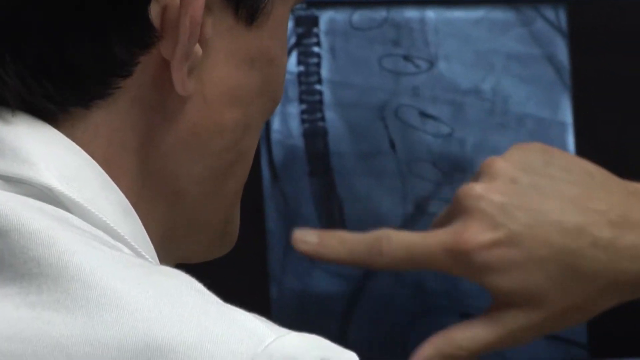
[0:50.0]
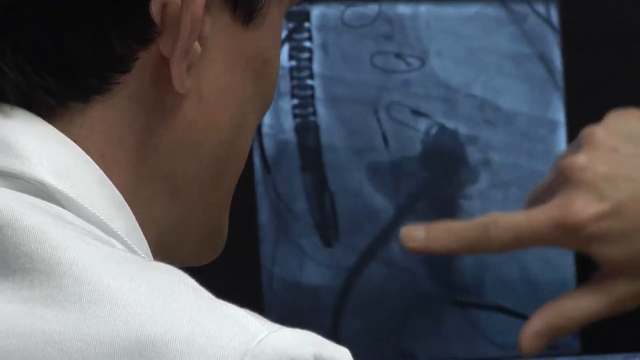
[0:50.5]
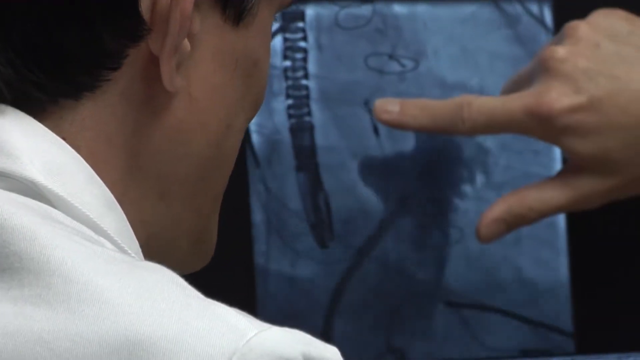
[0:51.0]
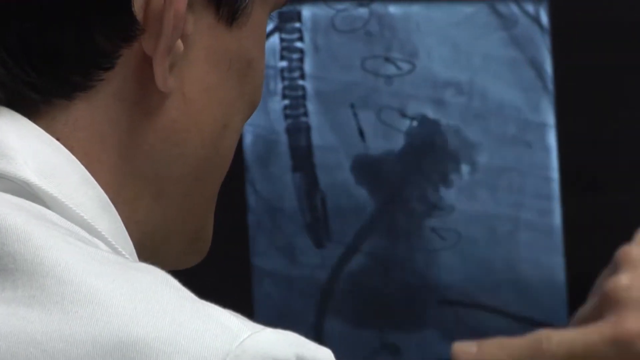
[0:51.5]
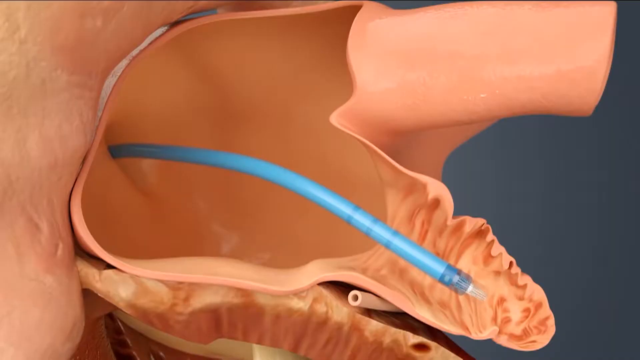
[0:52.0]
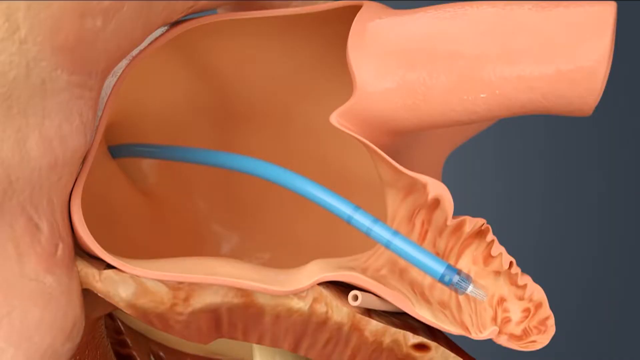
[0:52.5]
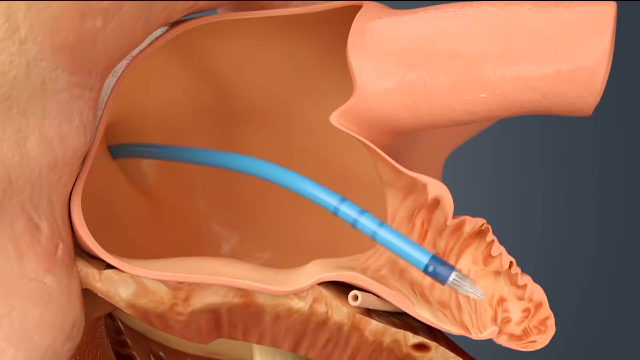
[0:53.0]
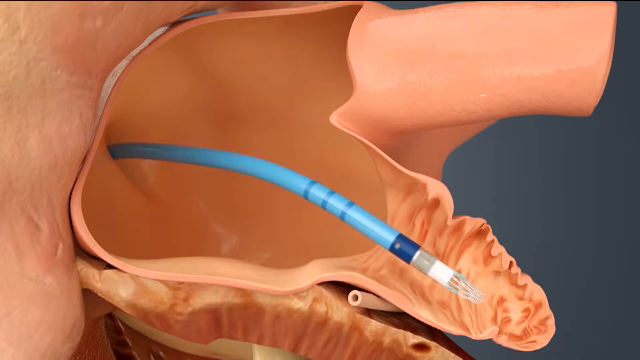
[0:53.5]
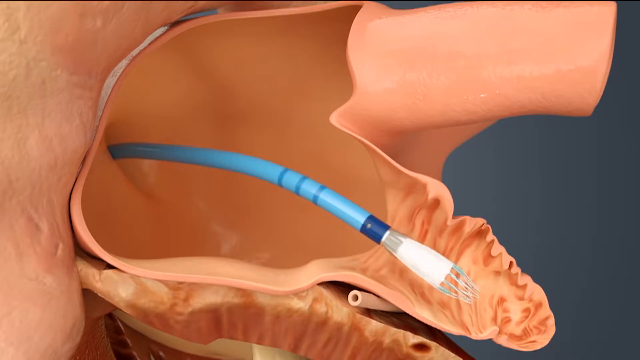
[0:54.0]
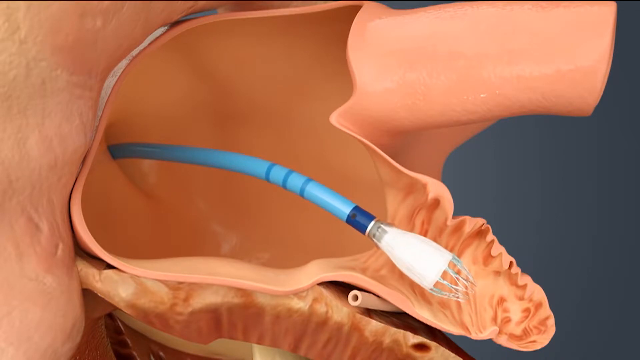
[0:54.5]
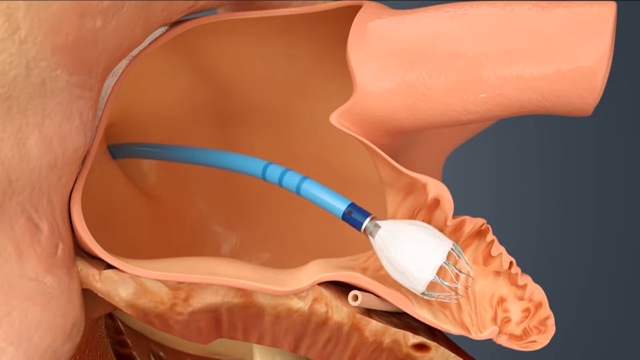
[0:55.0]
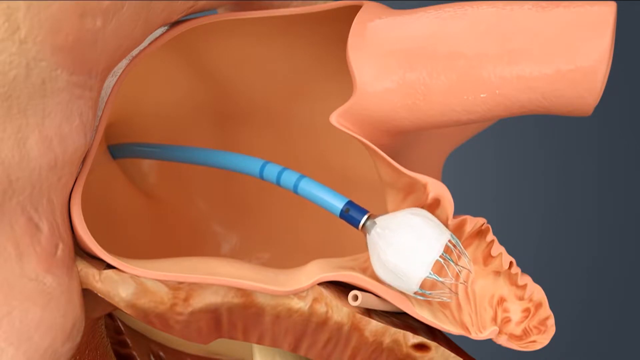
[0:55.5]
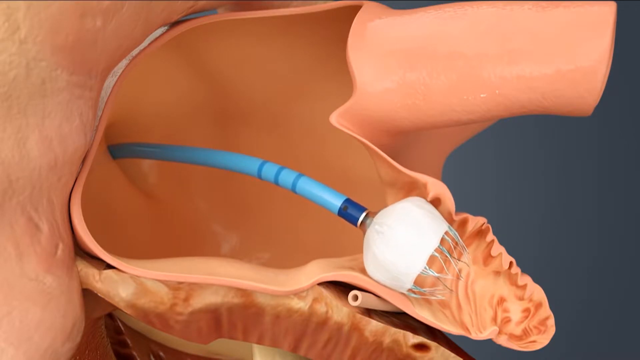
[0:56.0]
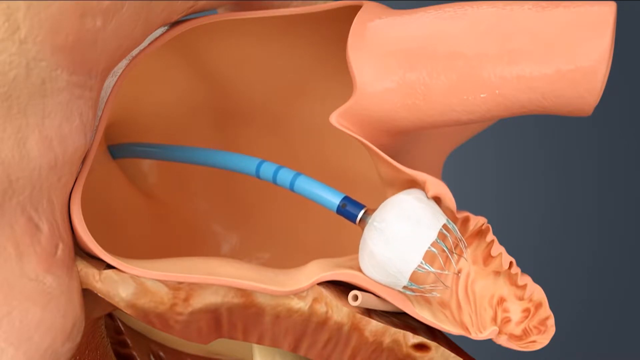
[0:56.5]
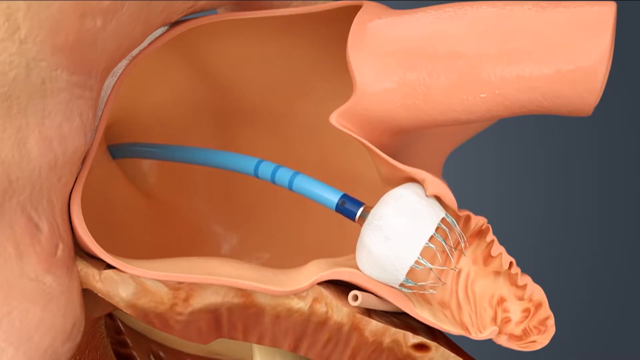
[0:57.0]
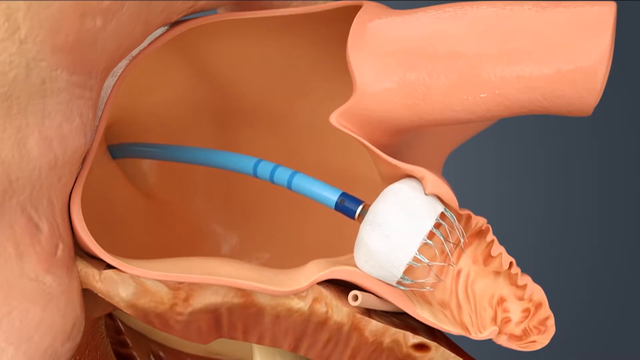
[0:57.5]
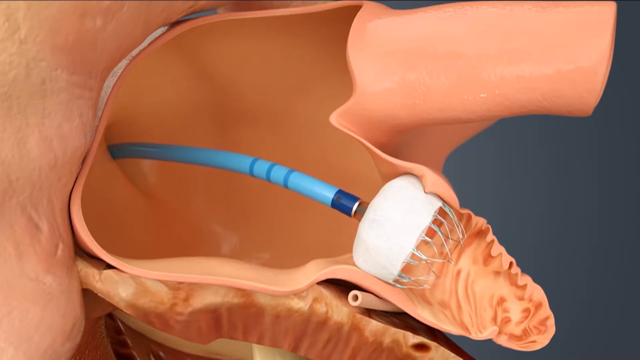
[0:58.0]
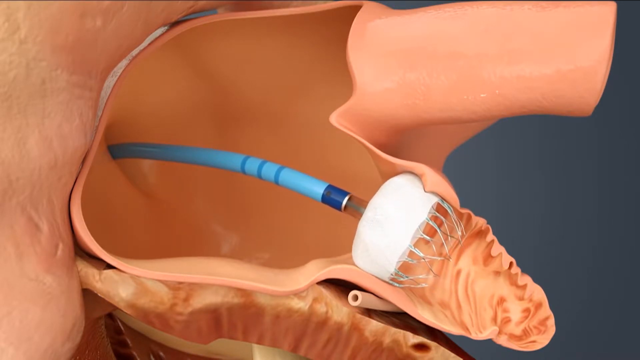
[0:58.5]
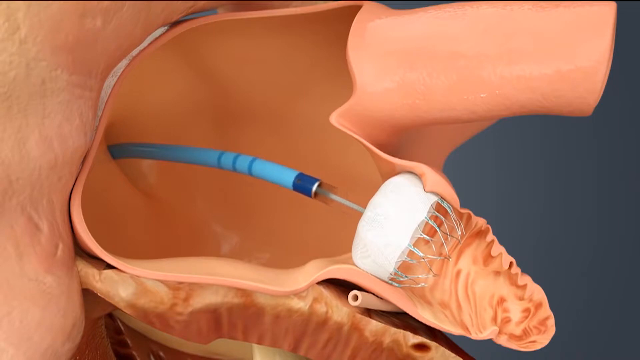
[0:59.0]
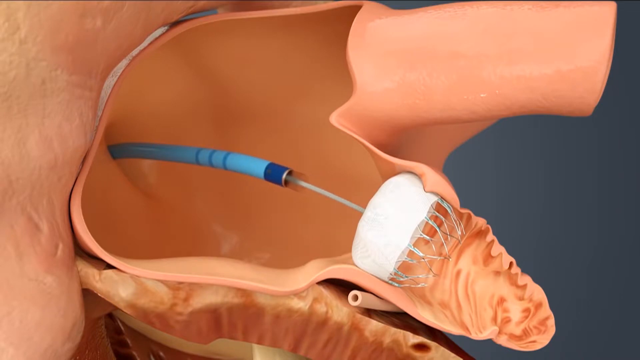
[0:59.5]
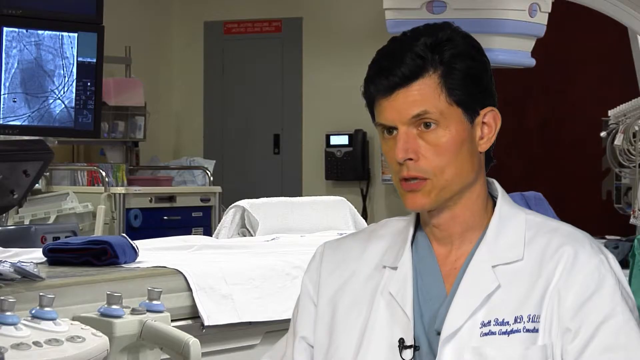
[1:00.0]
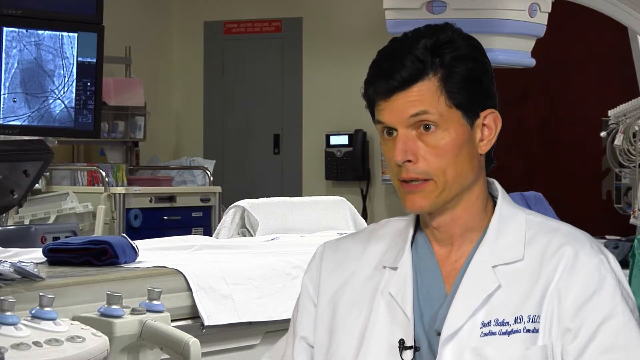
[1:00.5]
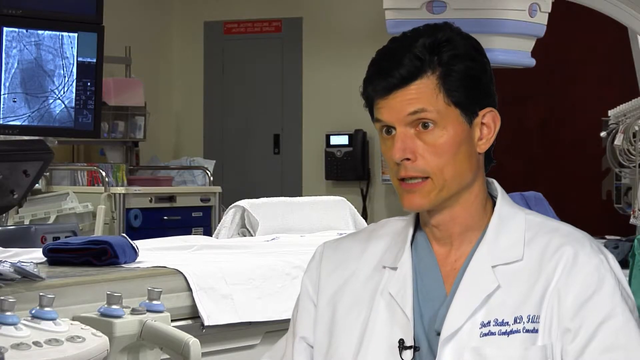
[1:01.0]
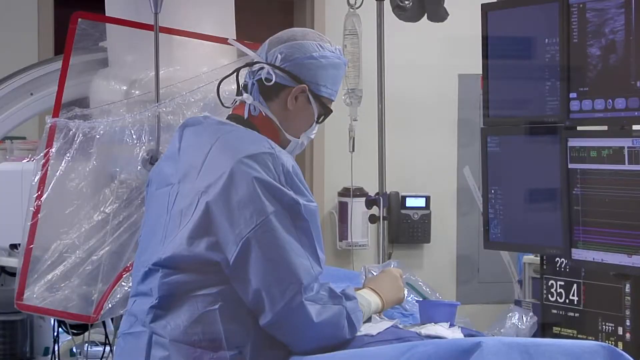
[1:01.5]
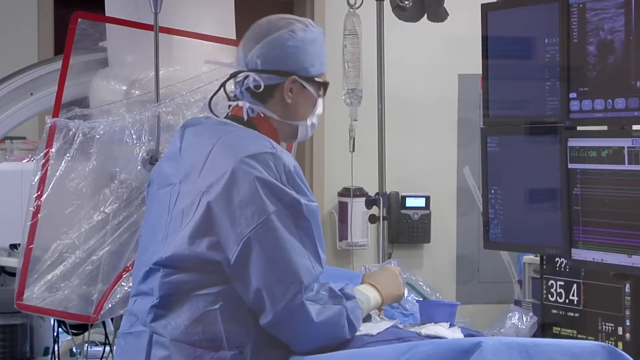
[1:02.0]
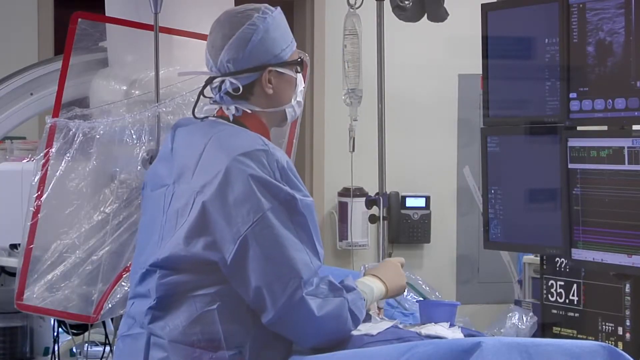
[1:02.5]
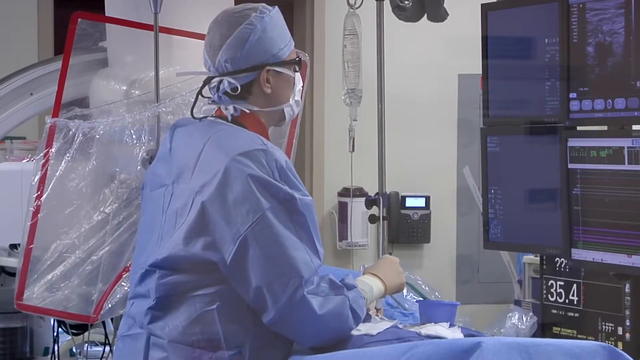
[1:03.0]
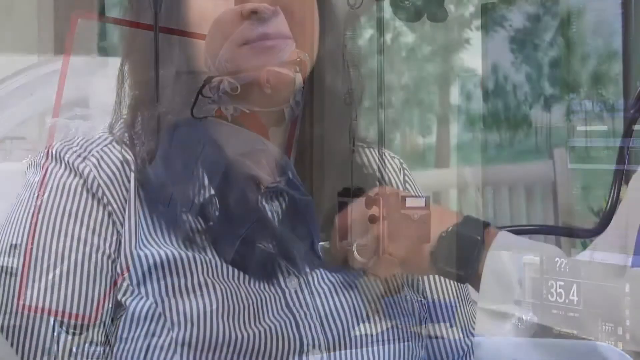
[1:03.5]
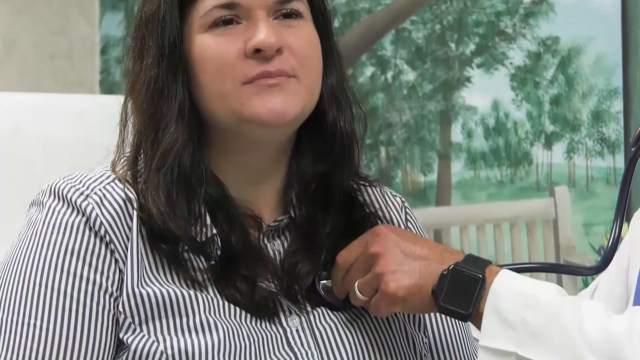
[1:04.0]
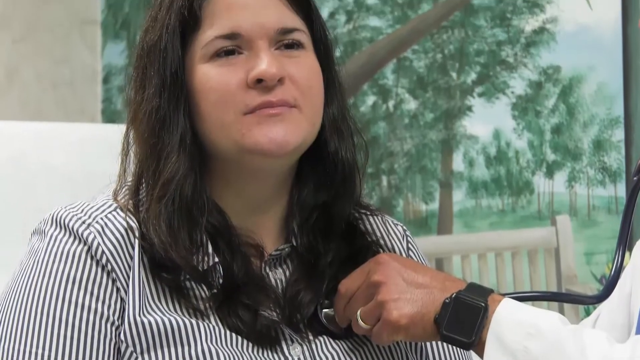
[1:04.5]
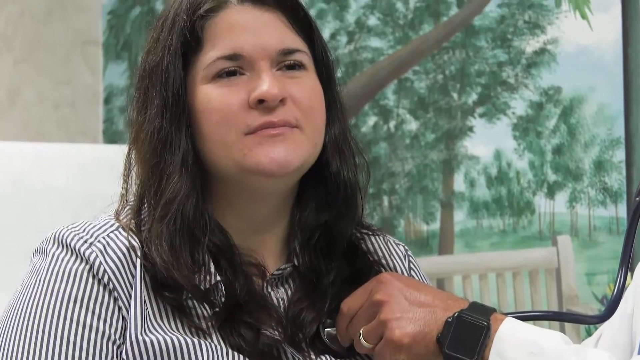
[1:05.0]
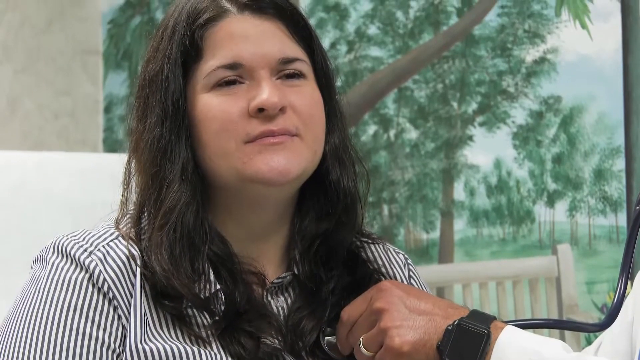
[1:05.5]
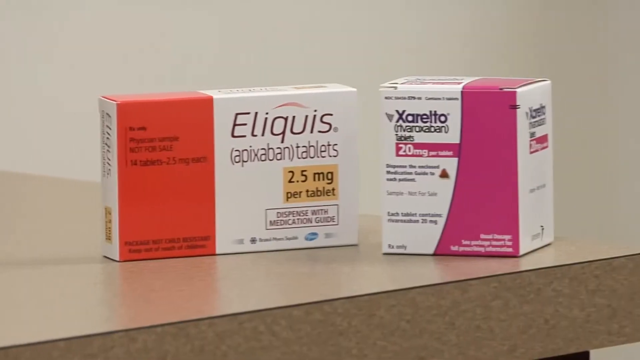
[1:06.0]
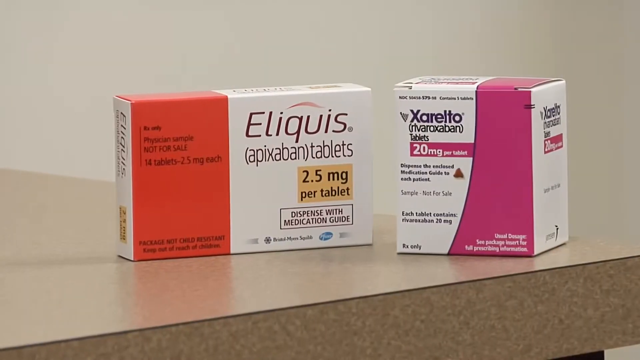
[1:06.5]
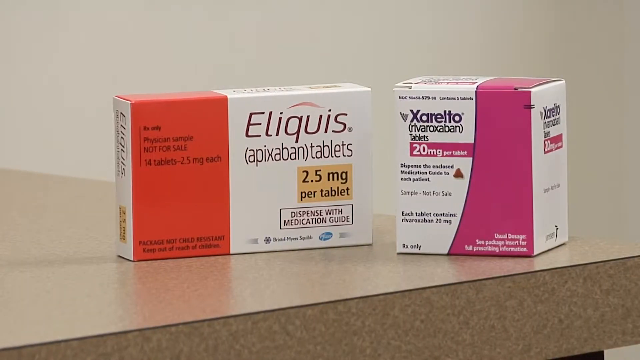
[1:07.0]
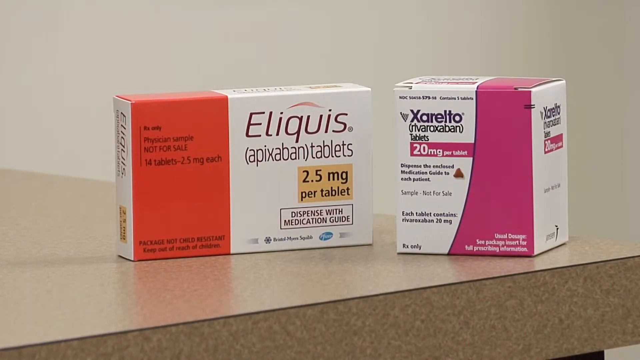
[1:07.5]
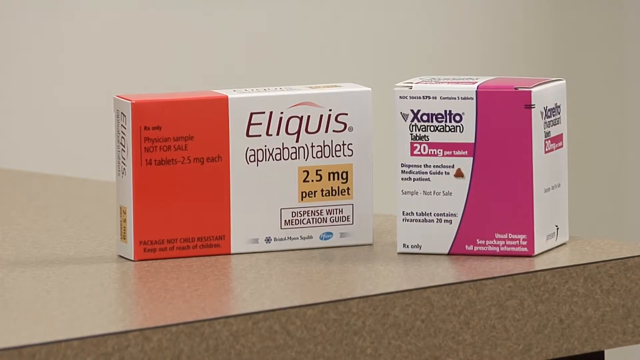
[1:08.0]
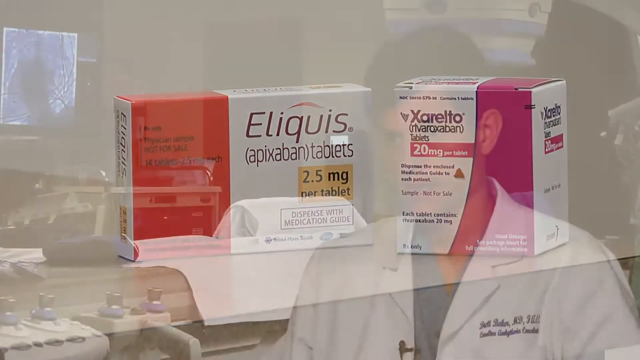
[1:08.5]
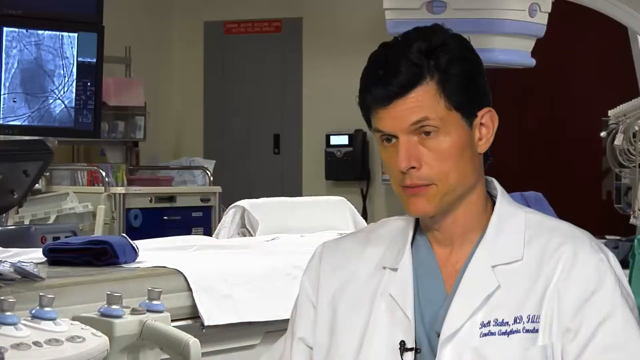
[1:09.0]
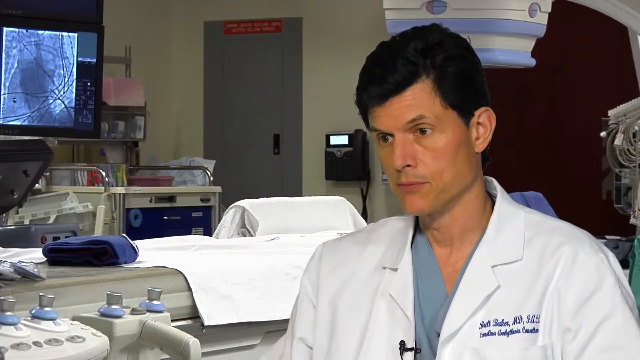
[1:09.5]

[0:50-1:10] The 3D animation goes into further detail, showing what is apparently wiring installed by the doctor to help the patient. It is a blue wire, and at its top is a white dome shape with wires sticking out, in one of the passages into the body. The white dome shape expands. After a quick transition, a patient has their heart evaluated with the instrument doctors use to hear the heartbeat. Two different medications are then advertised.